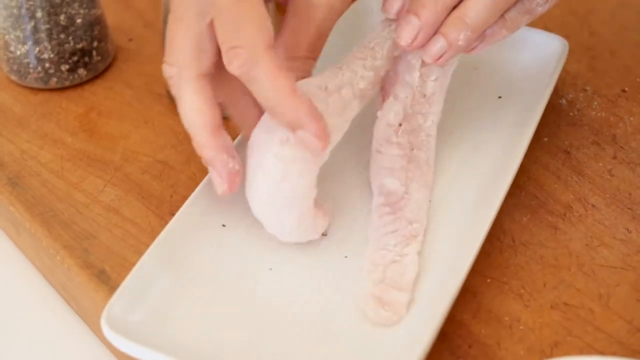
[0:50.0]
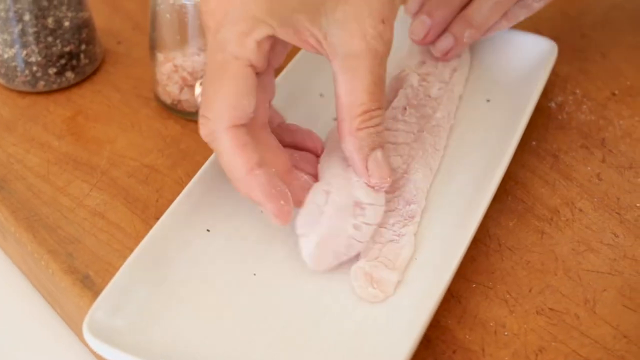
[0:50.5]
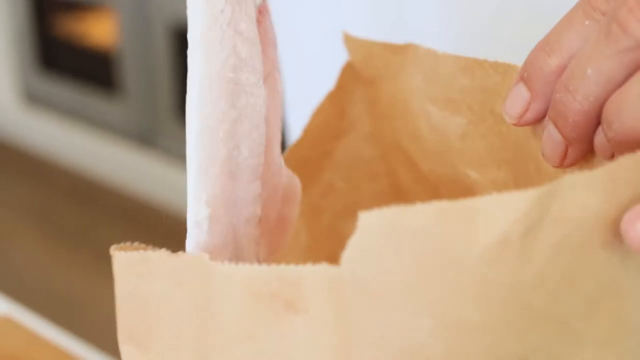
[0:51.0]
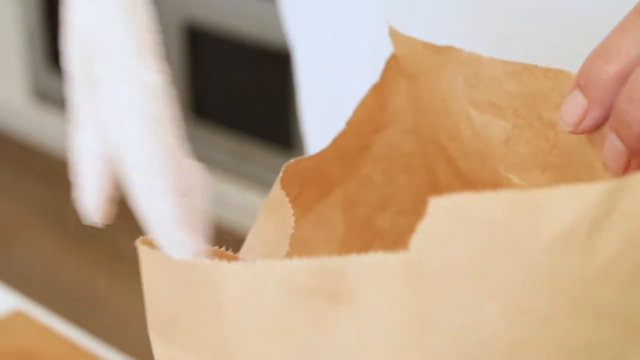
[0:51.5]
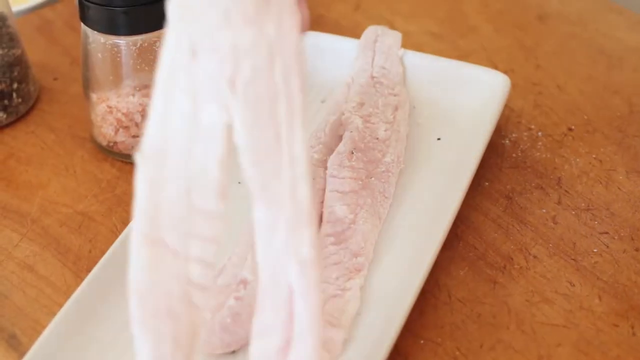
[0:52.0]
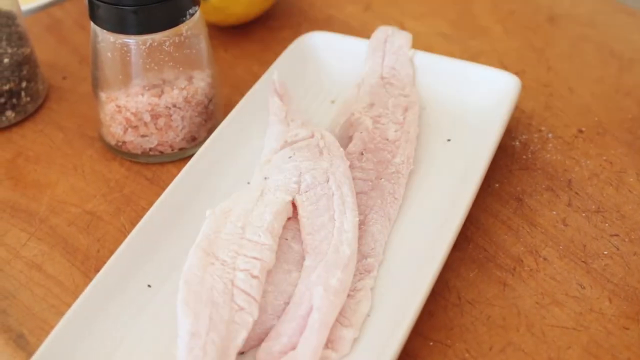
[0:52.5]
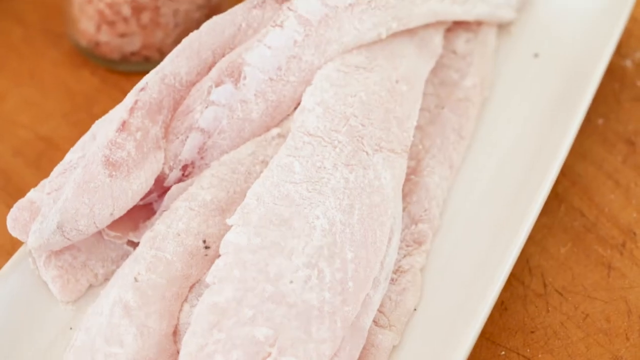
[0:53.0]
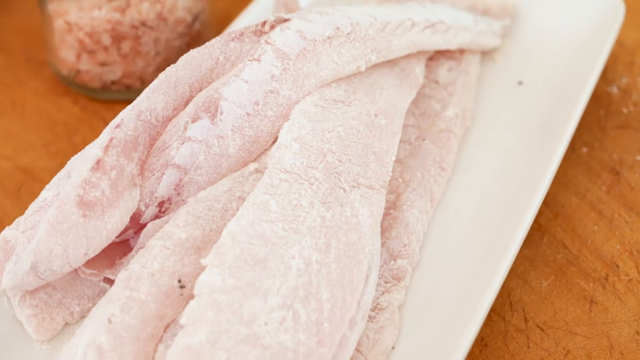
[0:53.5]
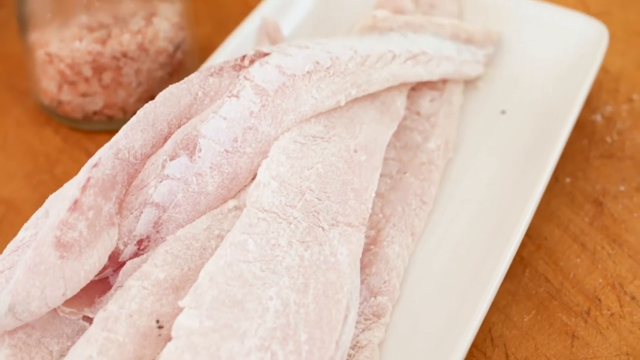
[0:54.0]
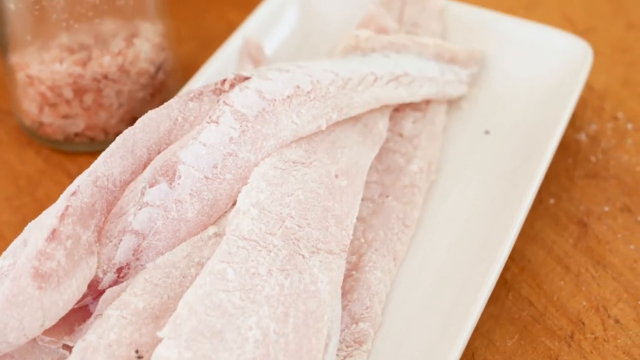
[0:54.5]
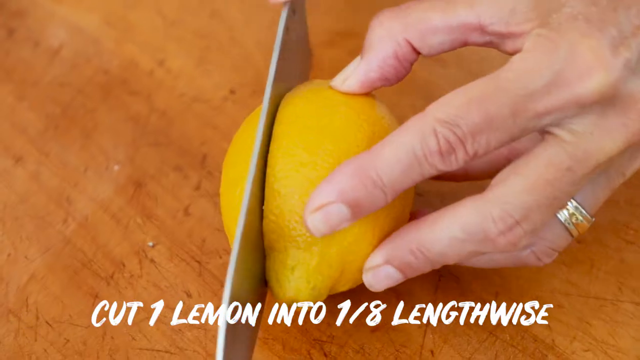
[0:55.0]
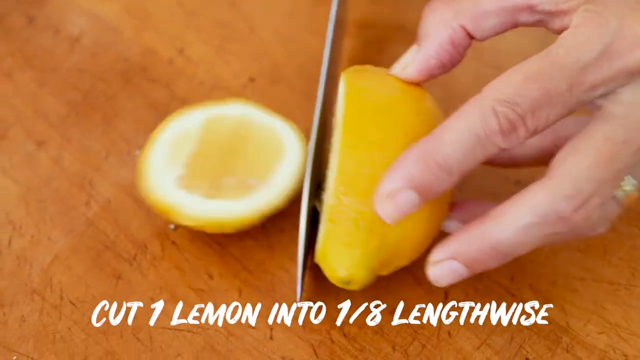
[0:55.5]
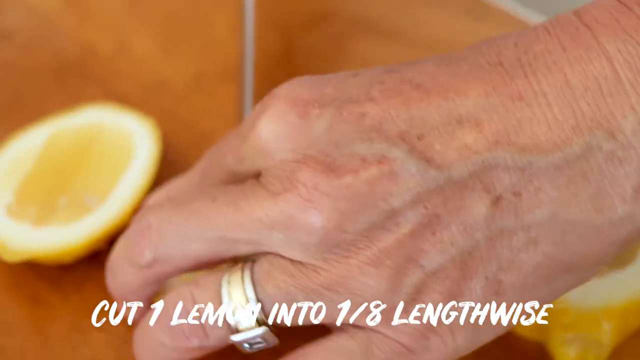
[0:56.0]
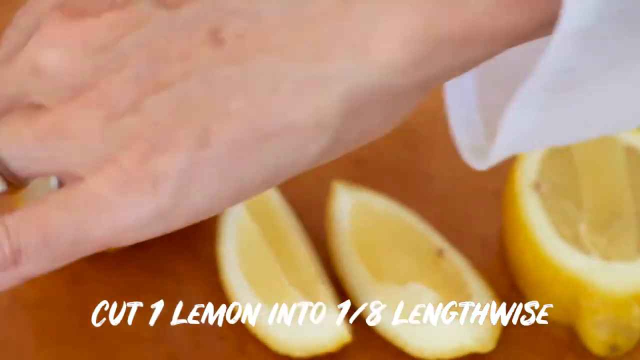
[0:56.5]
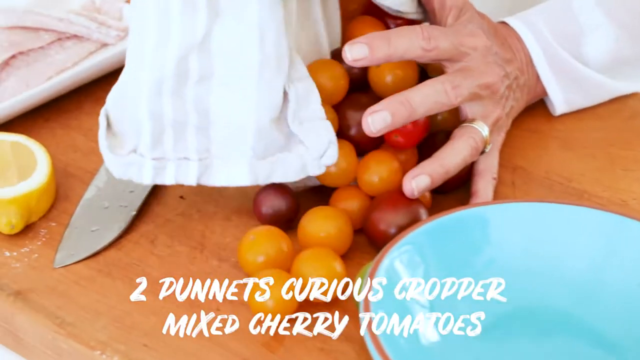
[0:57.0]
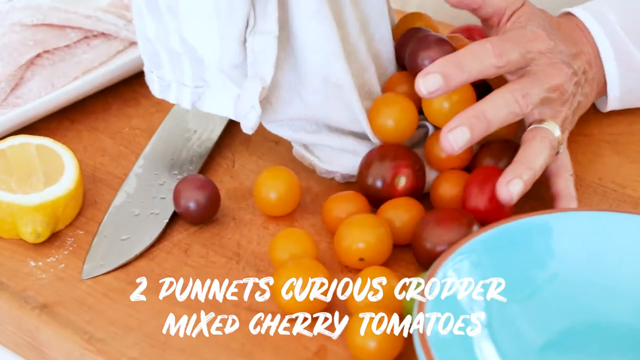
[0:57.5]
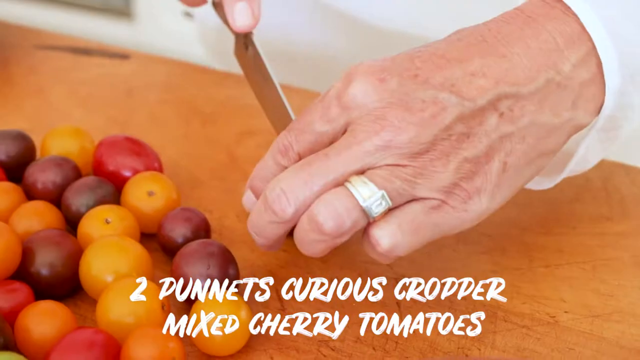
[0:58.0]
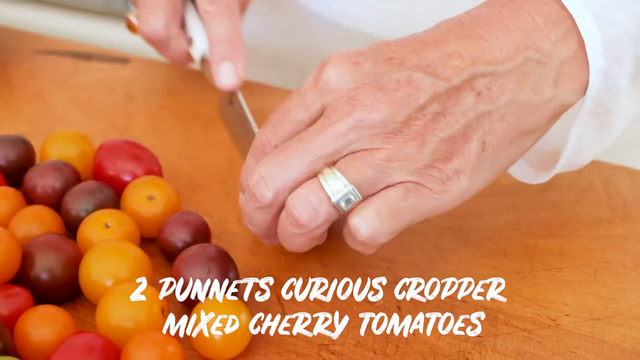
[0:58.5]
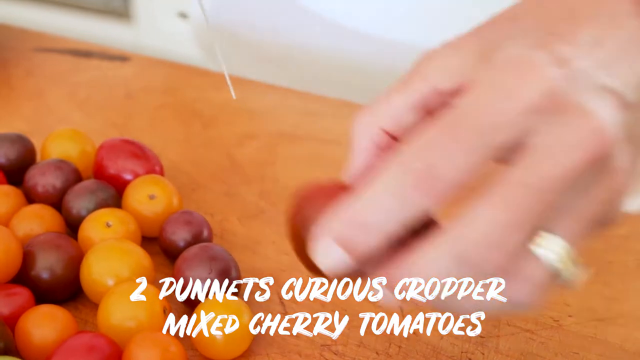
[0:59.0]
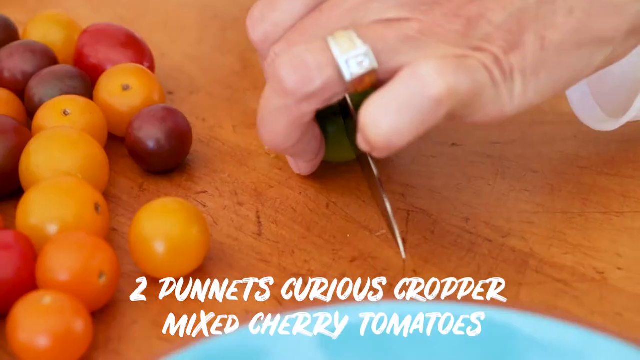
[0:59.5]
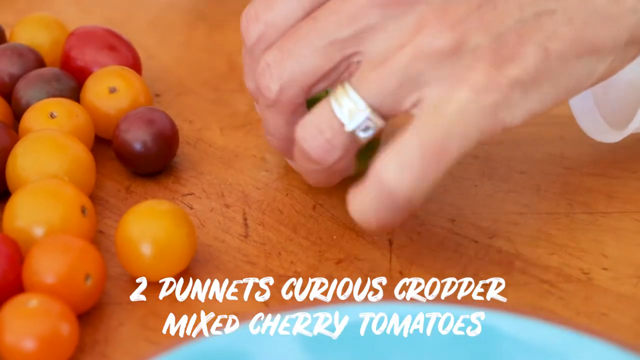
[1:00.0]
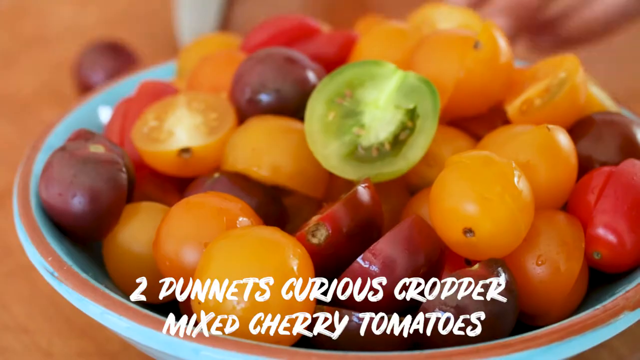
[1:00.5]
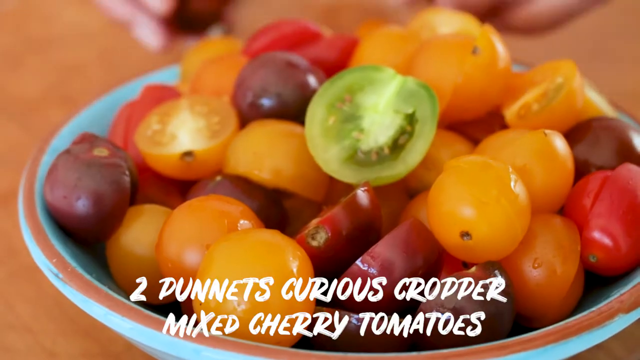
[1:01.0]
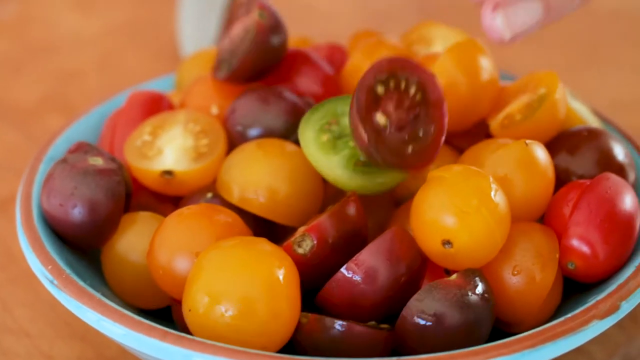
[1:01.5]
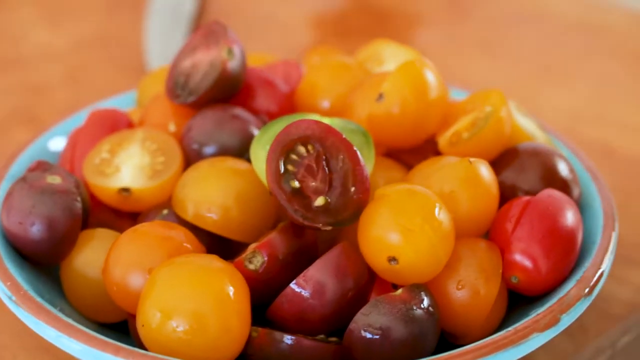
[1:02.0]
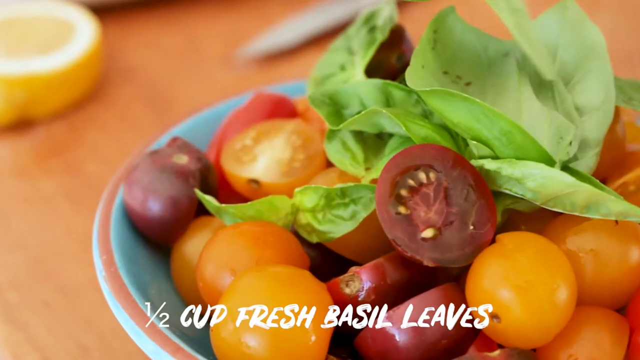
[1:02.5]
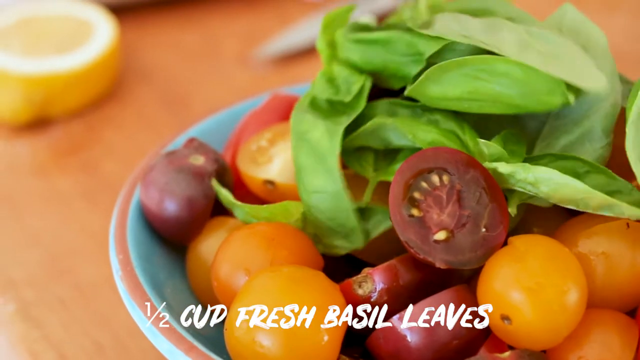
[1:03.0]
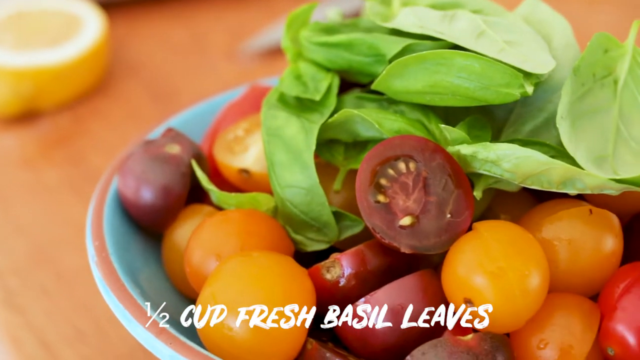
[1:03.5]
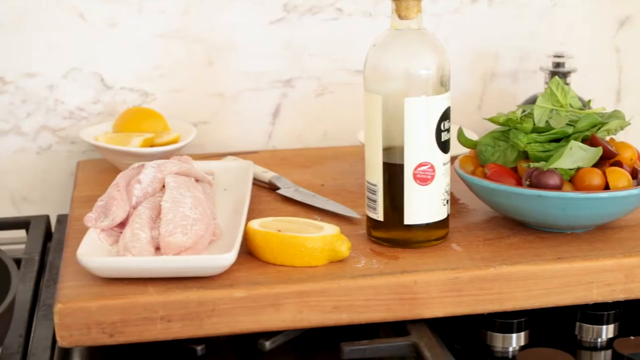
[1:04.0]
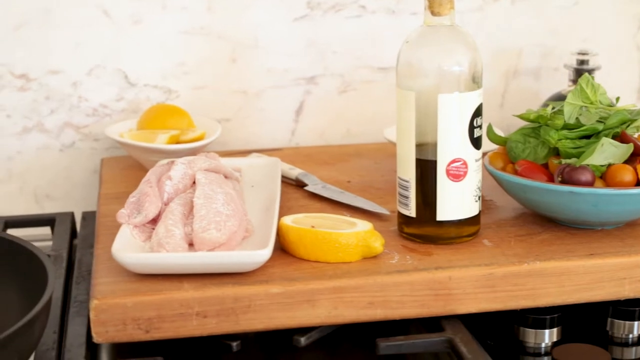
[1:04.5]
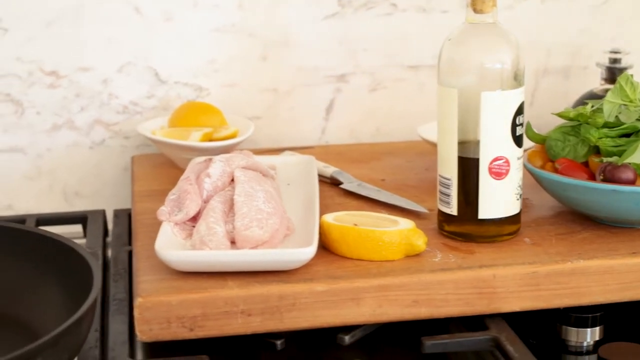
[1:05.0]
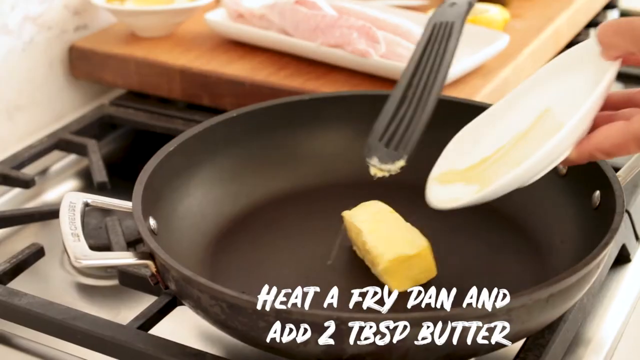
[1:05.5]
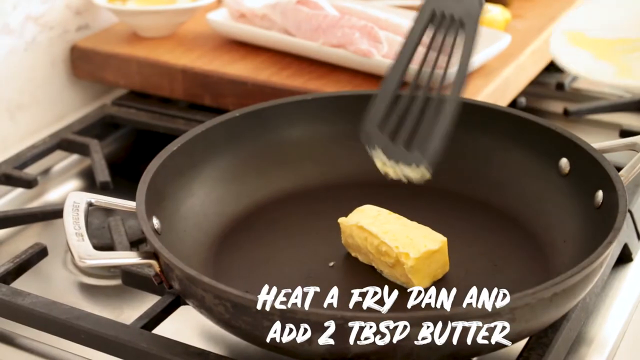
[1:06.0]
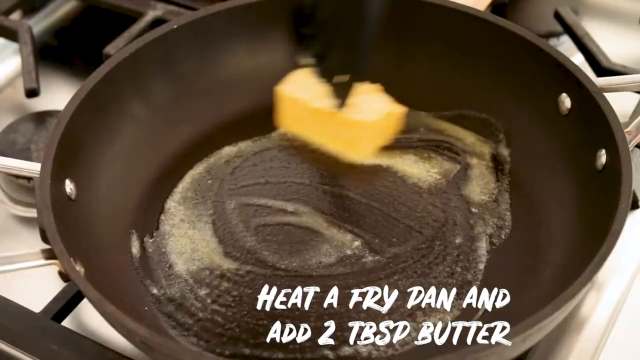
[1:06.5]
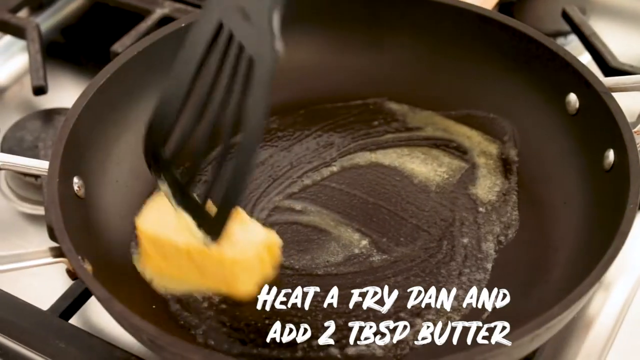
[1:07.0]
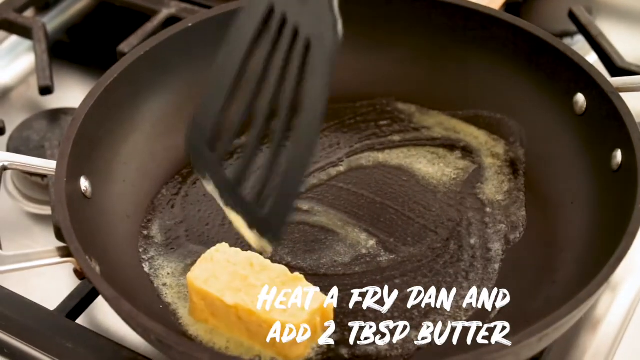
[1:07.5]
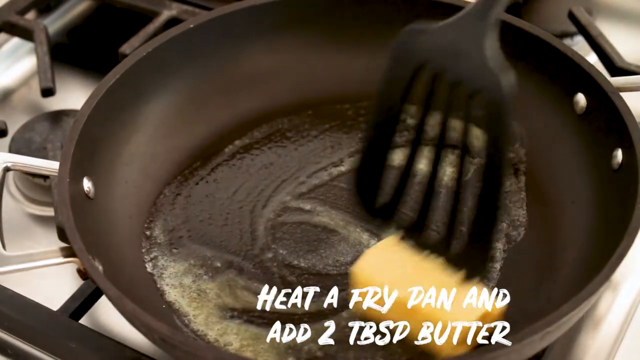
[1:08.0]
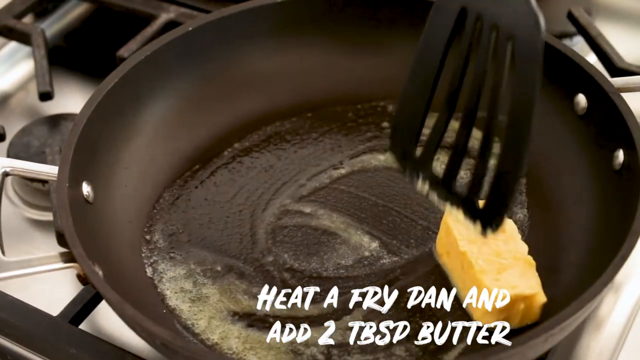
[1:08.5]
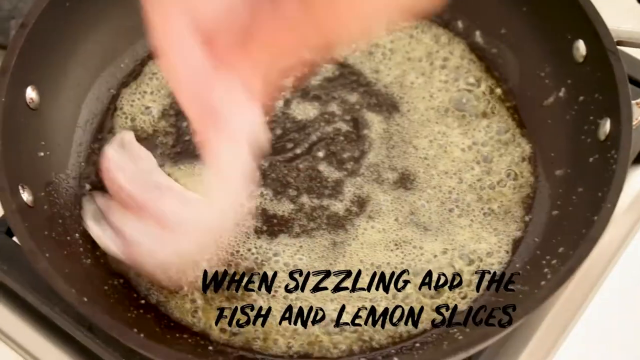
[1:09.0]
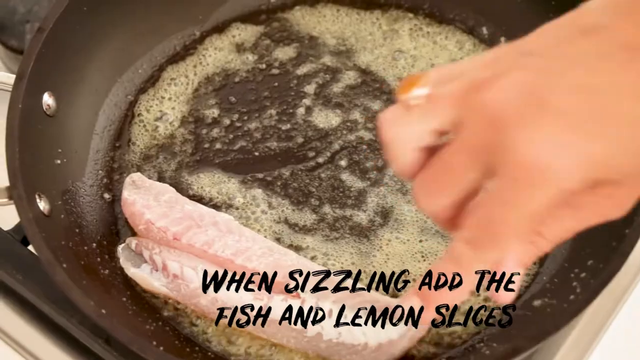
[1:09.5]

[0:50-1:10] Janine takes the fish fillets out of the brown bag and places them on a white plate. She cuts cherry tomatoes into halves and puts them into a bowl that appears to be a salad bowl, then cuts a lemon into slices. She puts all these ingredients next to her stove, a white gas stove. She puts butter in her frying pan, melts it using a black plastic spatula, and dips the fish fillets into the butter. Basil leaves are added to the cherry tomatoes.